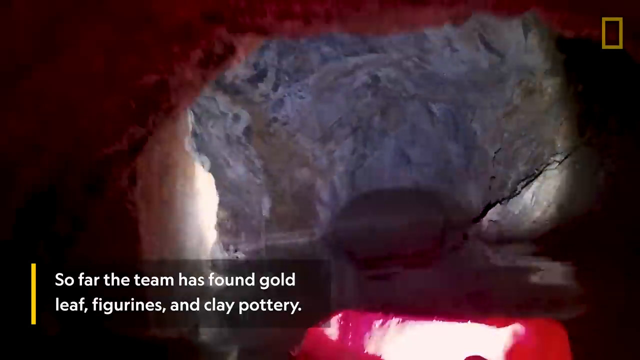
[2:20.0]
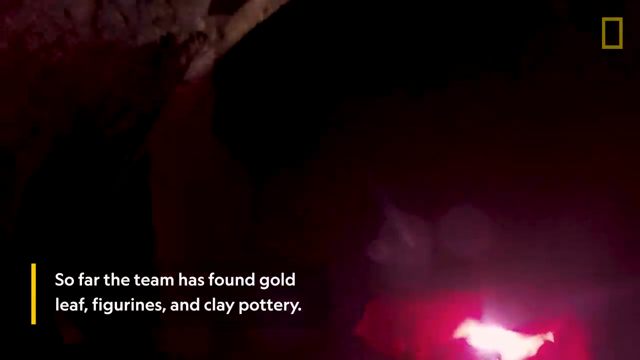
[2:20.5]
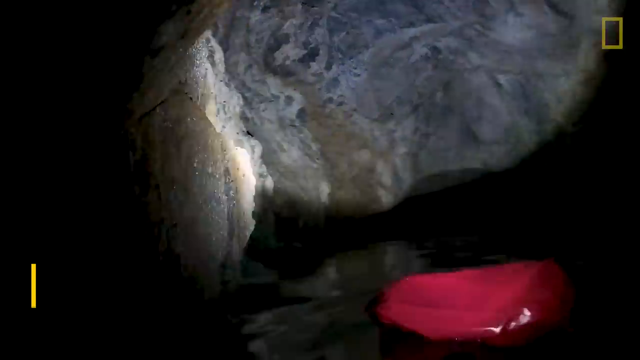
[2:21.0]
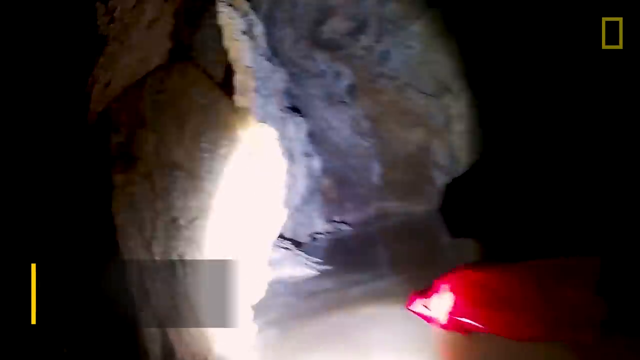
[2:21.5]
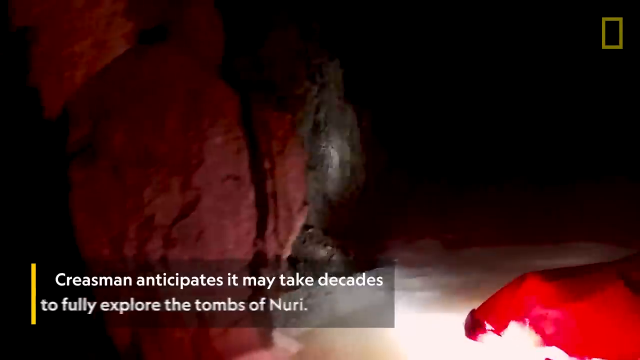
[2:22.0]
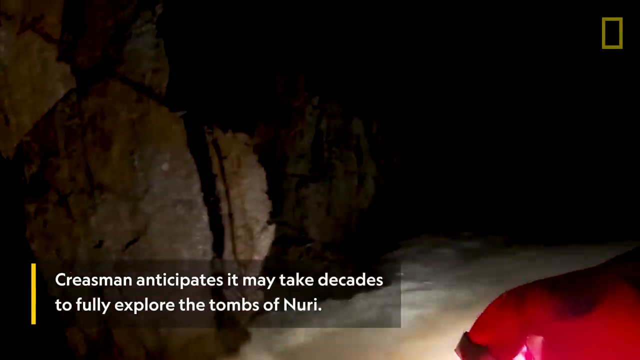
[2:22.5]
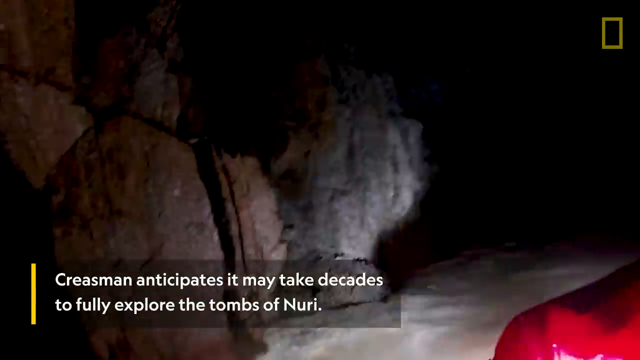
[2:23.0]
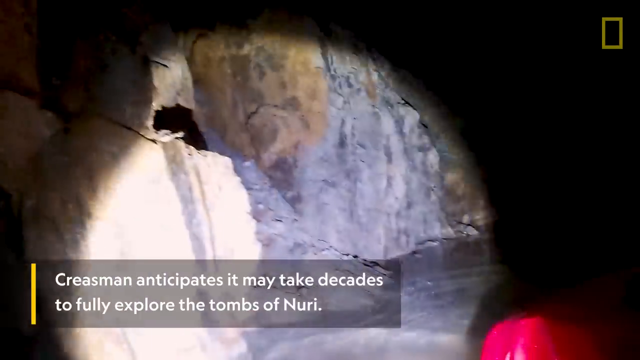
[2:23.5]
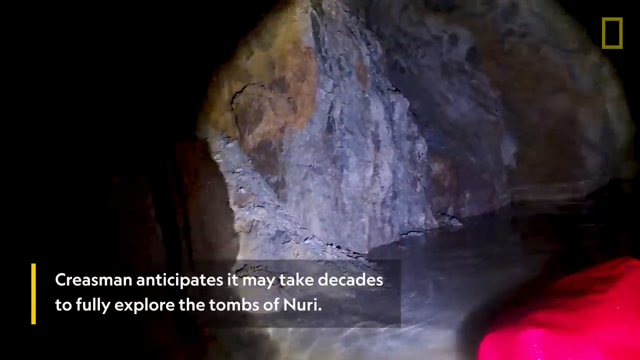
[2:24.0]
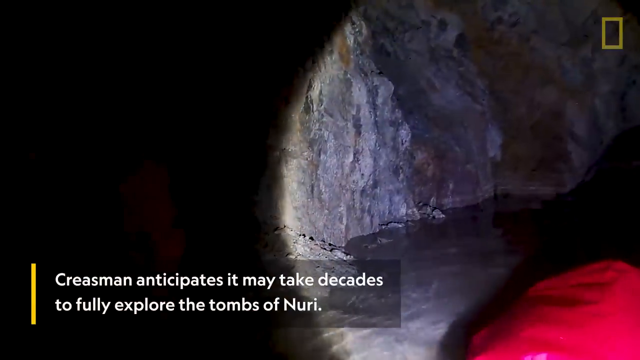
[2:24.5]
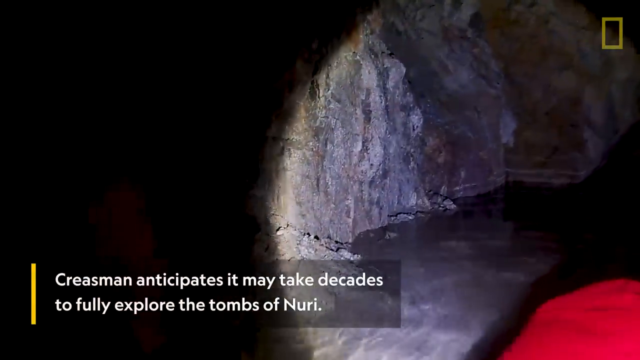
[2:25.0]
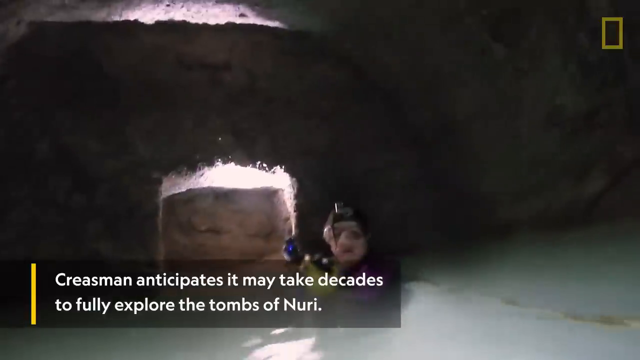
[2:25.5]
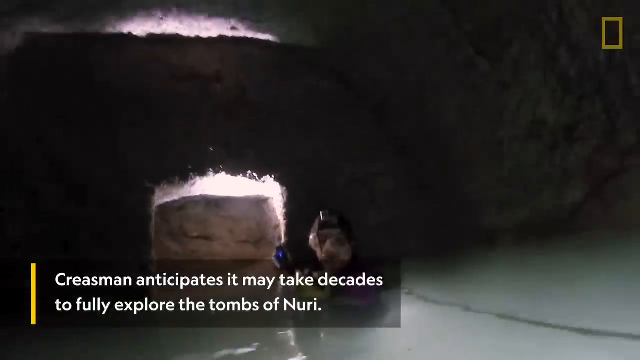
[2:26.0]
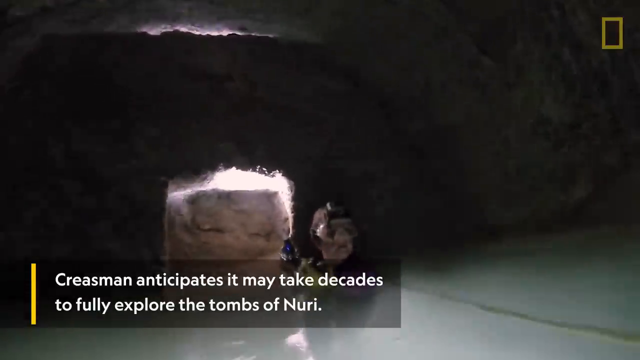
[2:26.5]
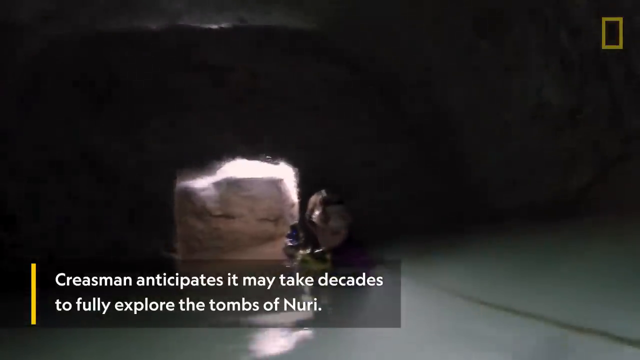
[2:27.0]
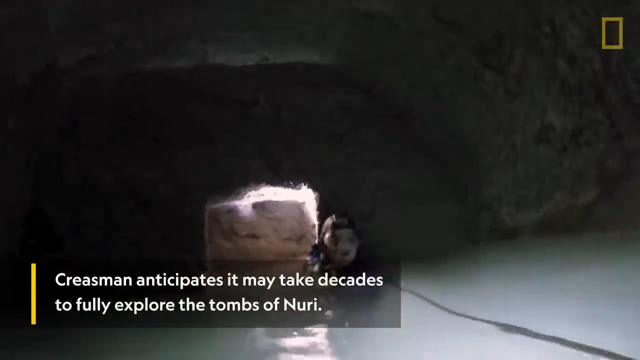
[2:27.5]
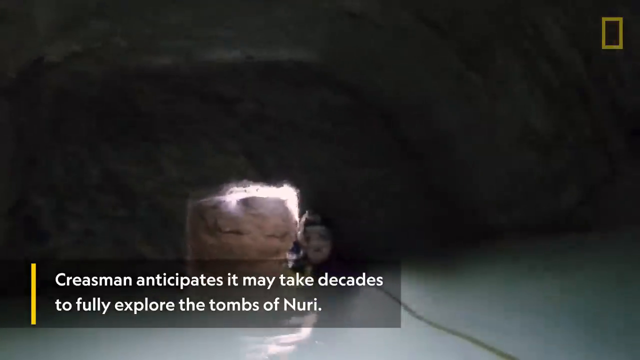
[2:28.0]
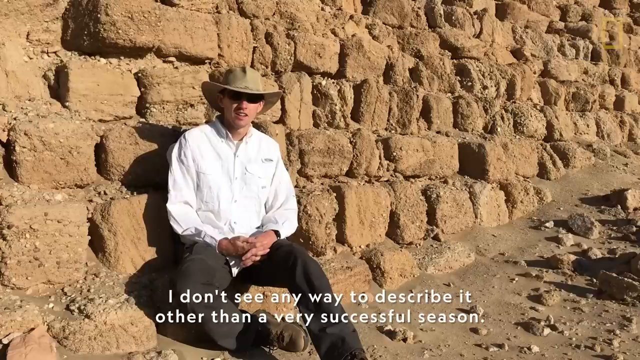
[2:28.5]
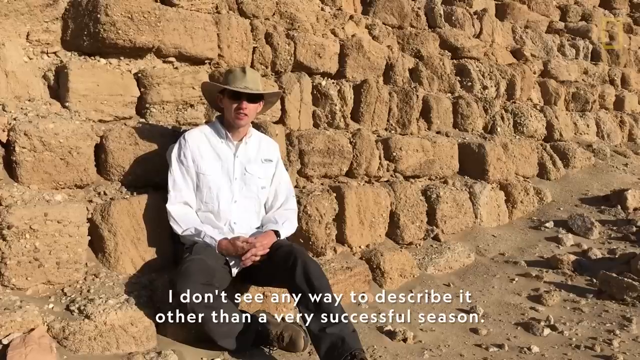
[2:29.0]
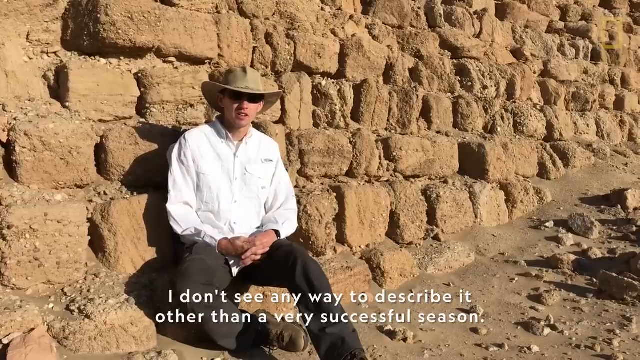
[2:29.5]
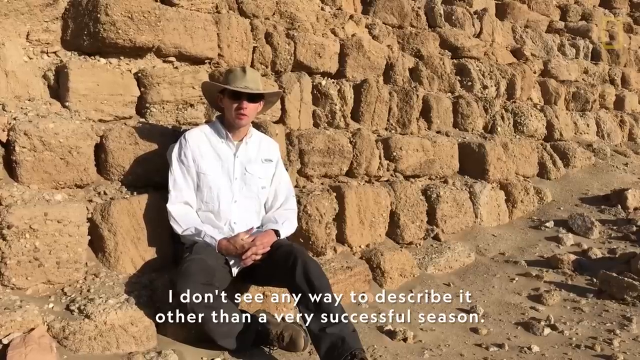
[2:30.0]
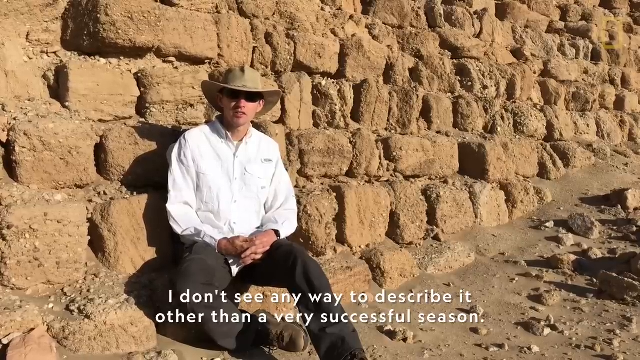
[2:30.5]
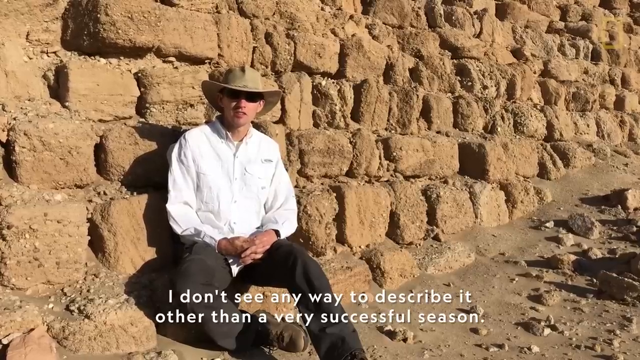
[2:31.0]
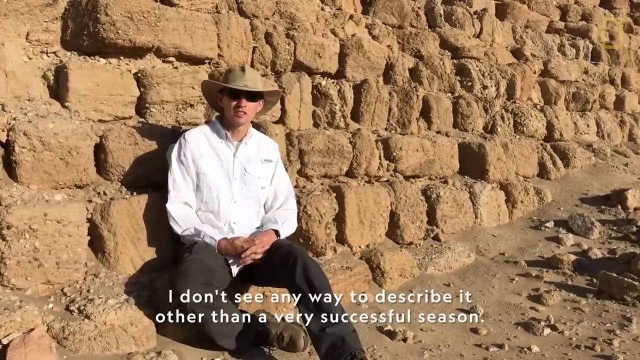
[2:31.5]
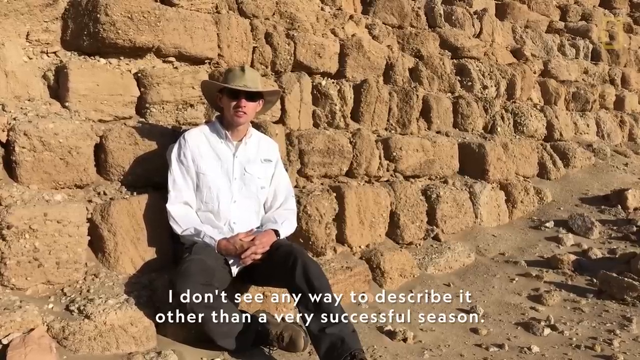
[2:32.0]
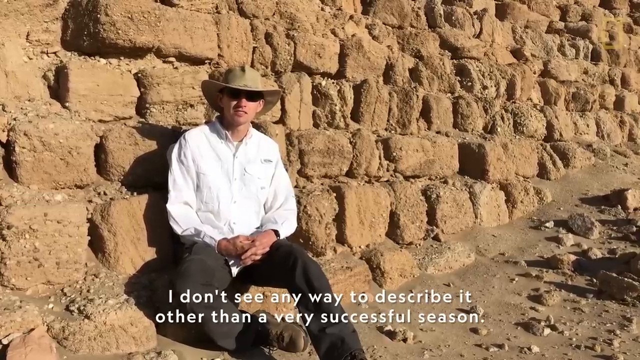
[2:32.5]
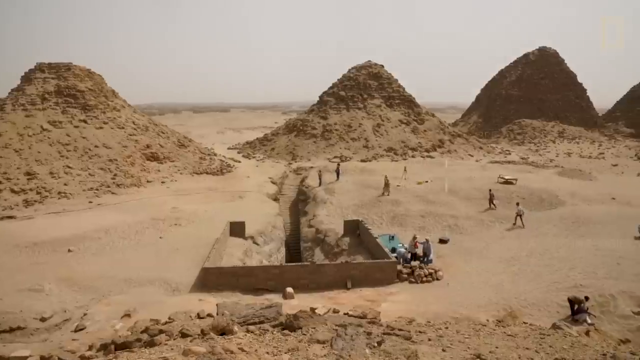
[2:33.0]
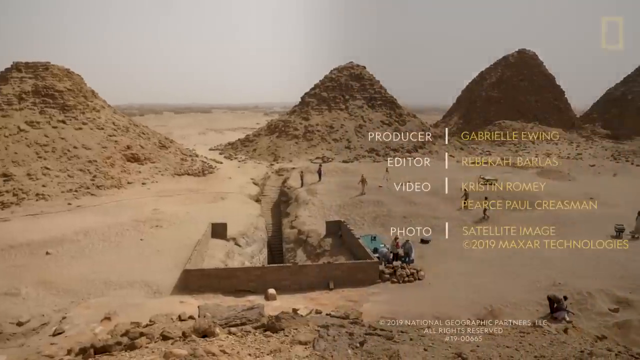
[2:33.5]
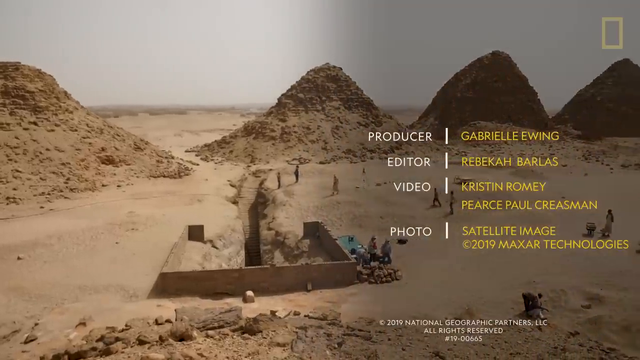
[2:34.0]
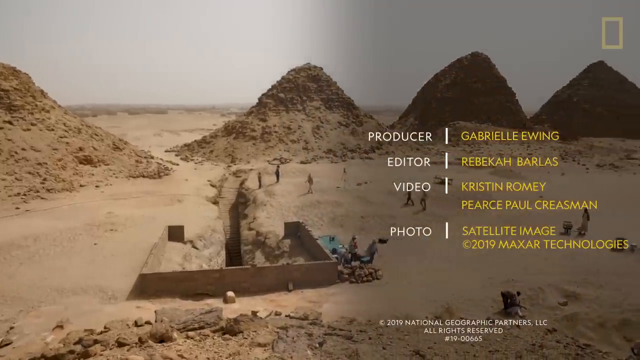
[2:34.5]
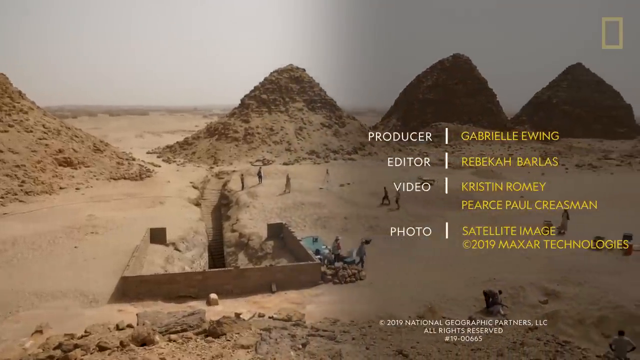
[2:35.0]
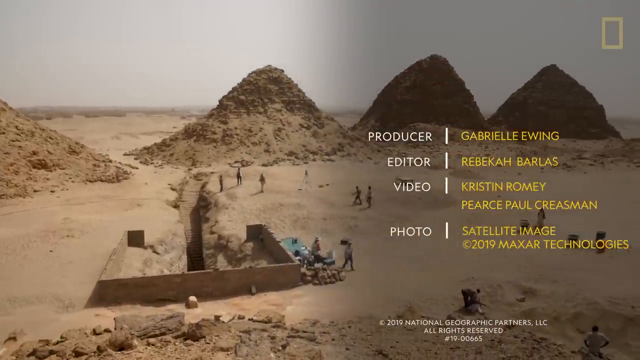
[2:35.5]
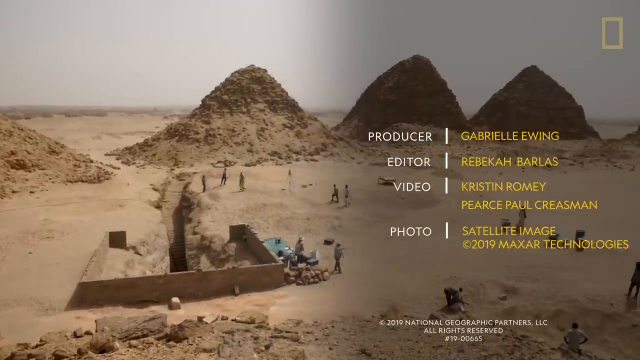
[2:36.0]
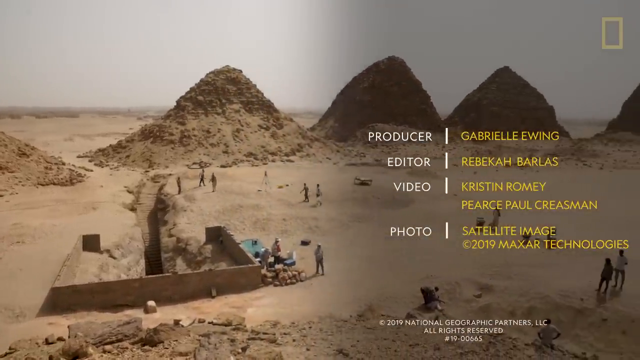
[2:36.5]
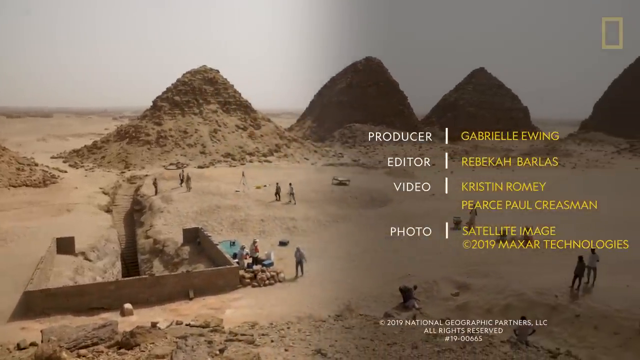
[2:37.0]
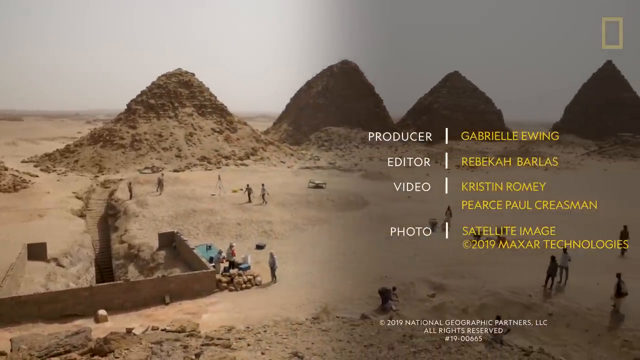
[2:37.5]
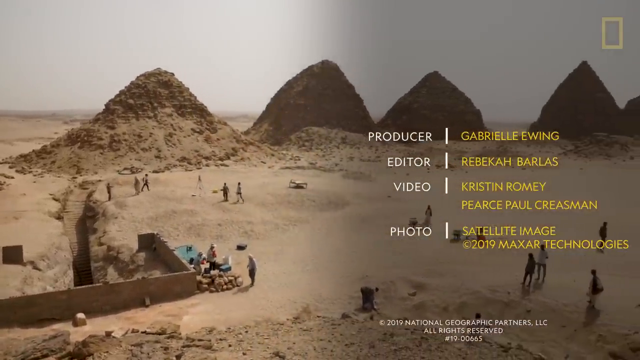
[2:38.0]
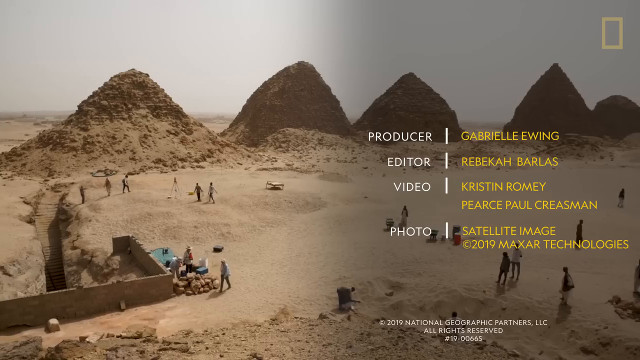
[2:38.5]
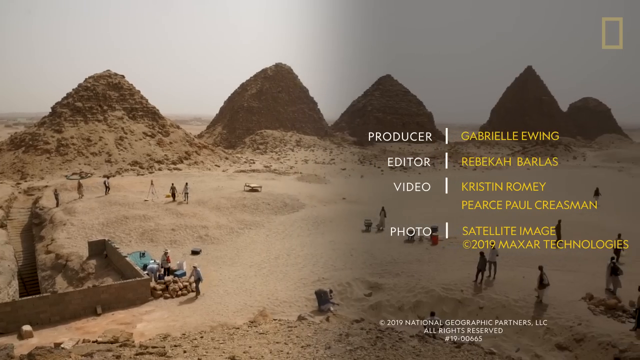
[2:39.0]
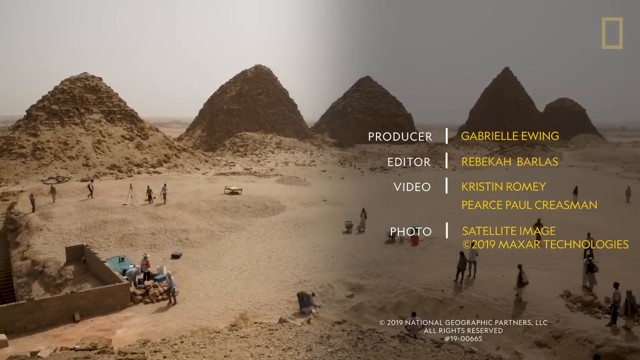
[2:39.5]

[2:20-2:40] Explorer Pierce, a middle-aged to older white man who appears to be in his late 50s or early 60s, is at the site.